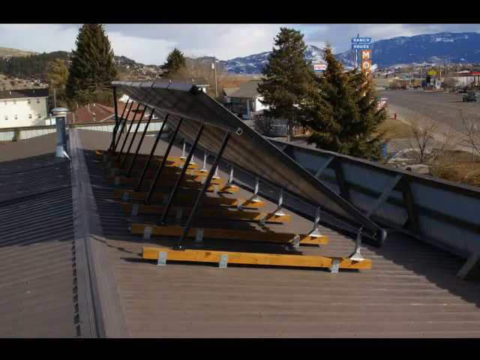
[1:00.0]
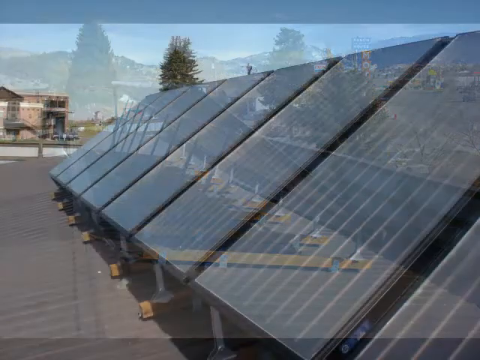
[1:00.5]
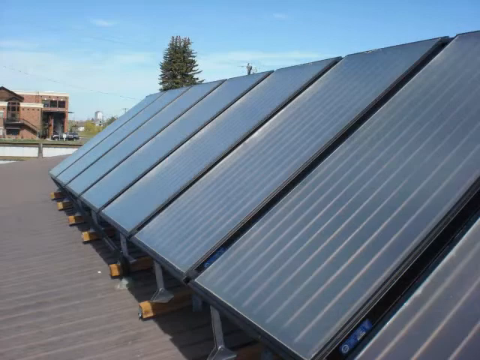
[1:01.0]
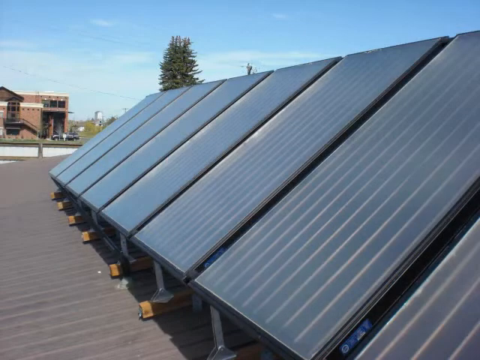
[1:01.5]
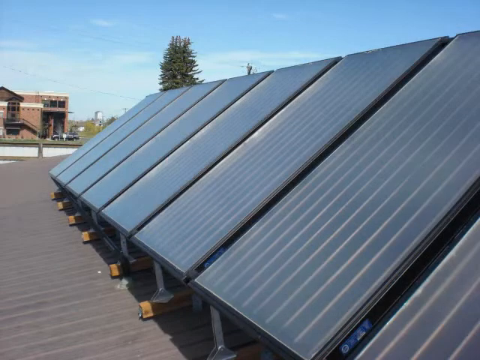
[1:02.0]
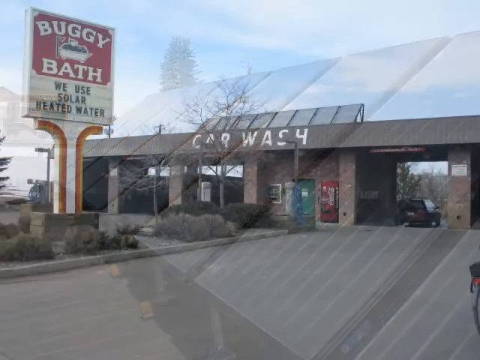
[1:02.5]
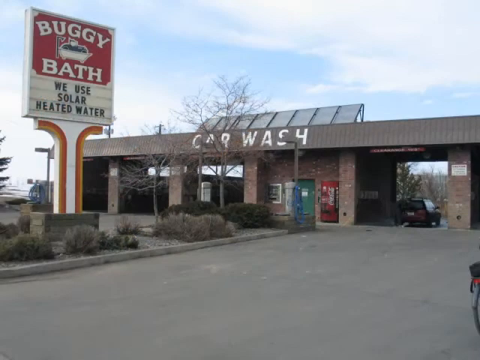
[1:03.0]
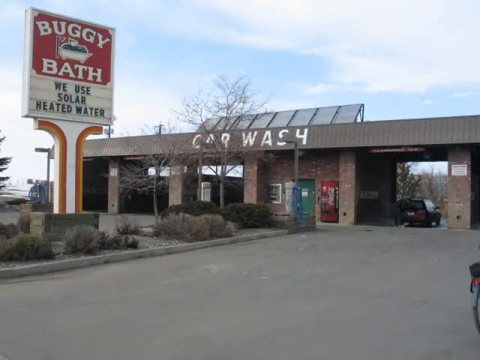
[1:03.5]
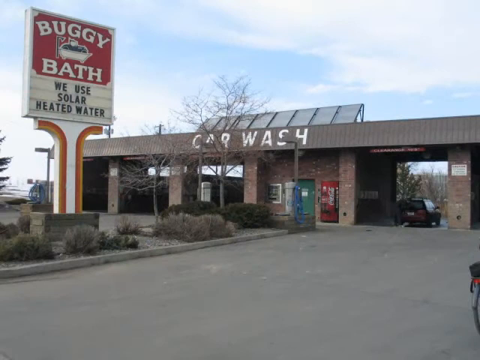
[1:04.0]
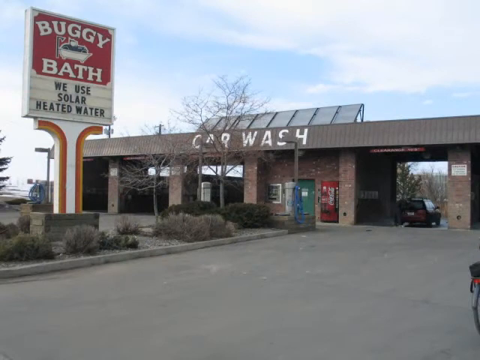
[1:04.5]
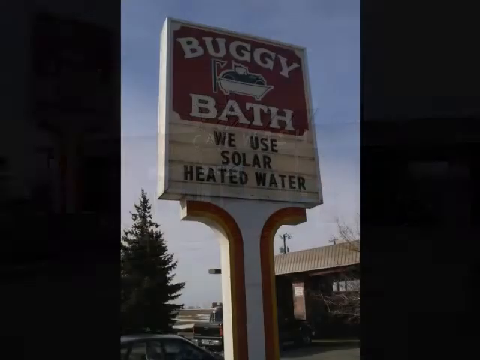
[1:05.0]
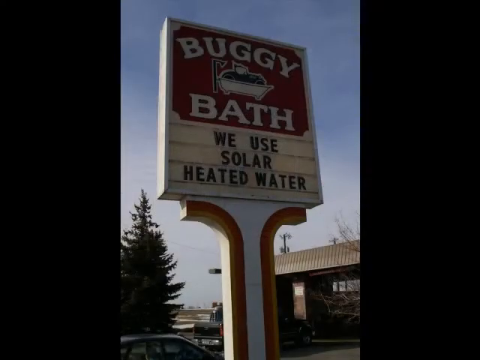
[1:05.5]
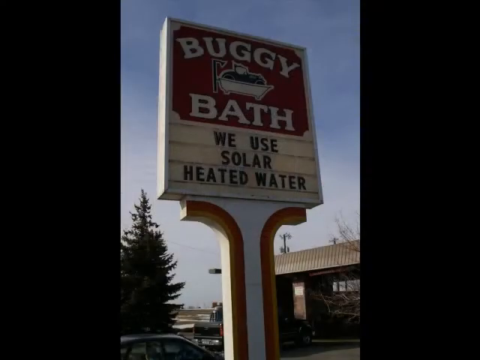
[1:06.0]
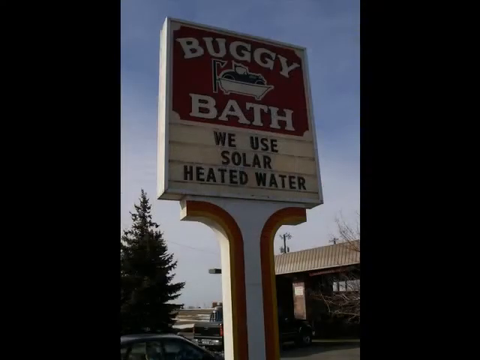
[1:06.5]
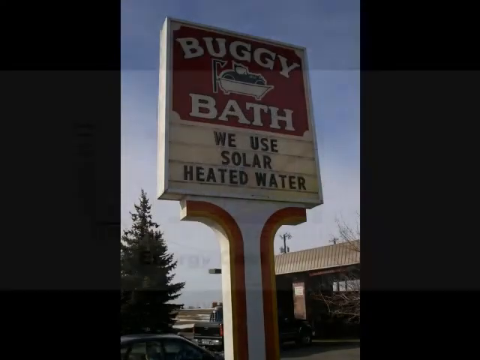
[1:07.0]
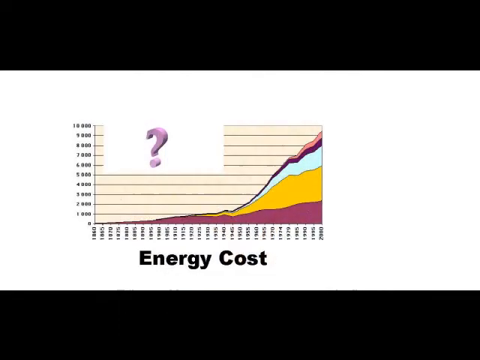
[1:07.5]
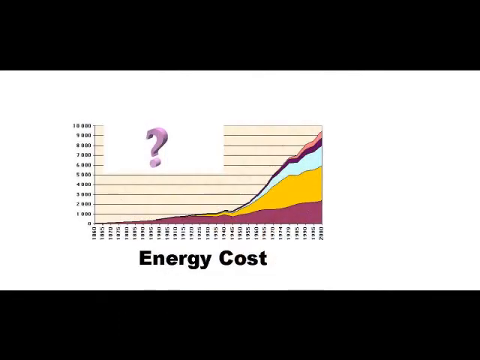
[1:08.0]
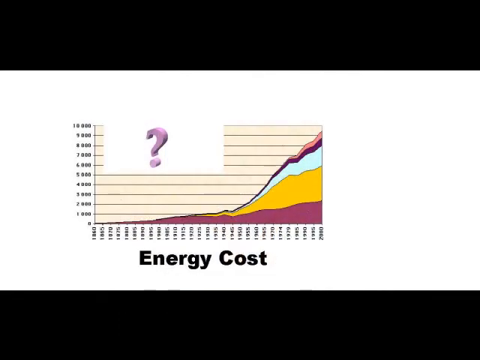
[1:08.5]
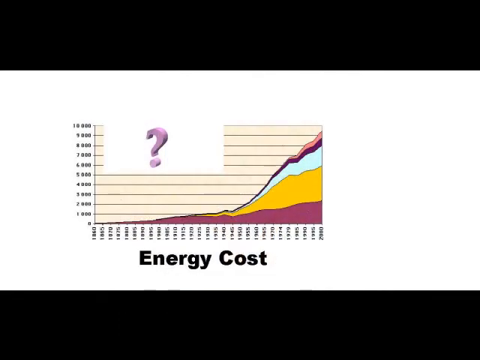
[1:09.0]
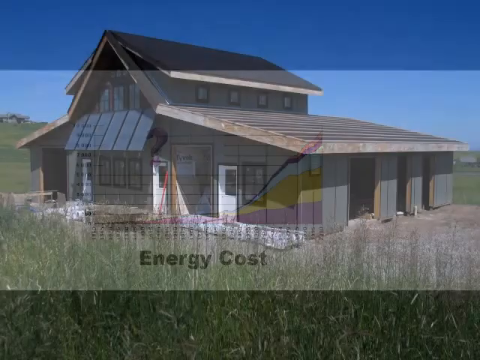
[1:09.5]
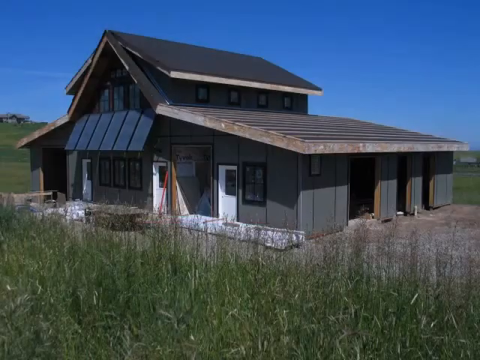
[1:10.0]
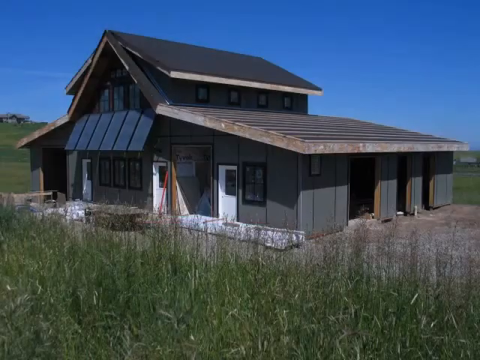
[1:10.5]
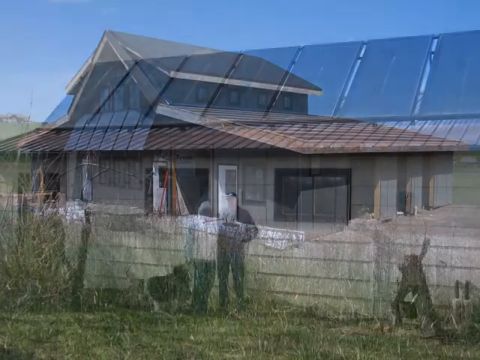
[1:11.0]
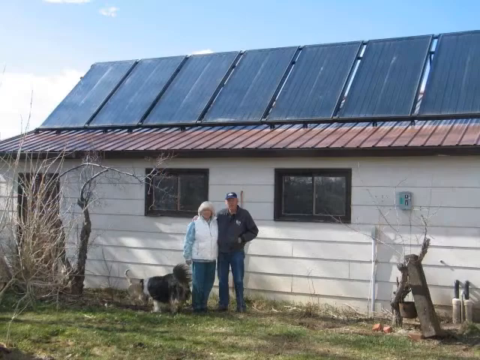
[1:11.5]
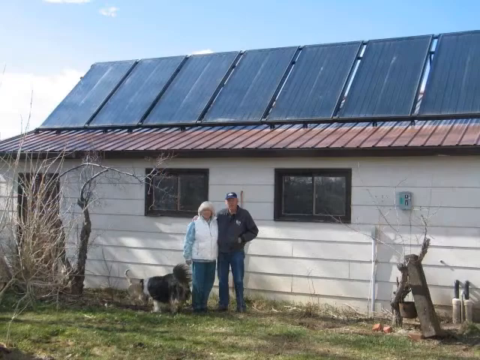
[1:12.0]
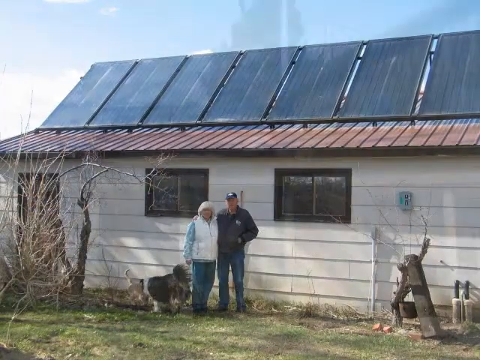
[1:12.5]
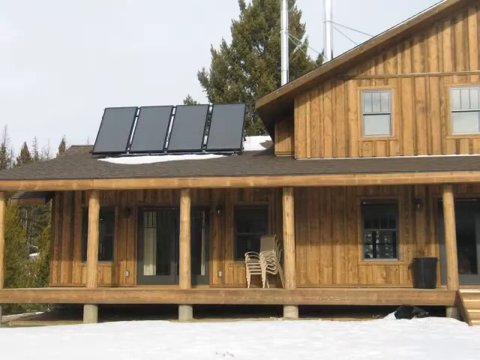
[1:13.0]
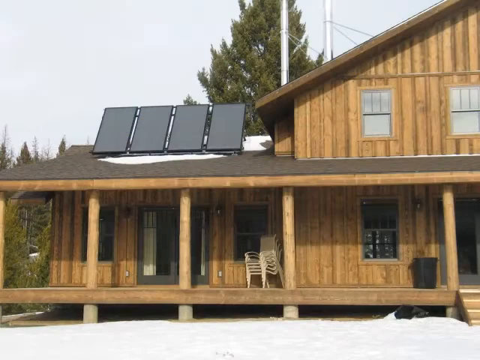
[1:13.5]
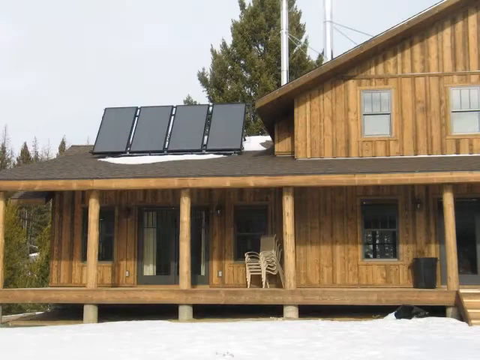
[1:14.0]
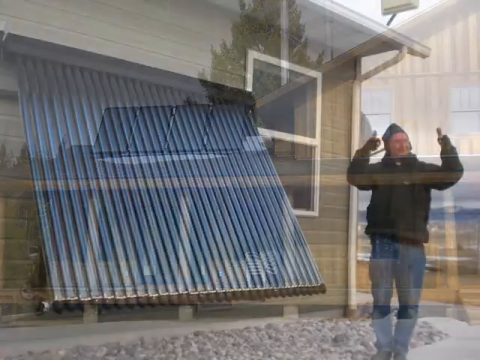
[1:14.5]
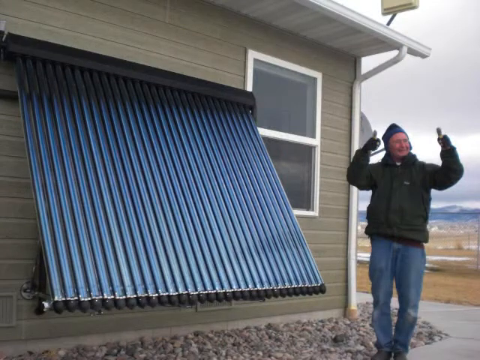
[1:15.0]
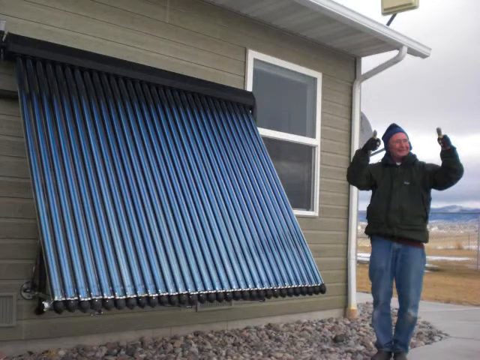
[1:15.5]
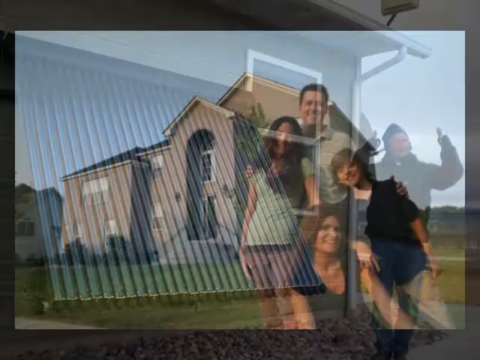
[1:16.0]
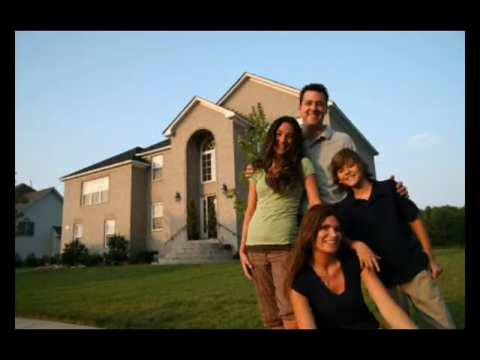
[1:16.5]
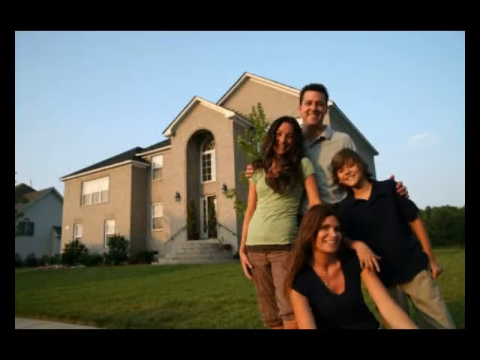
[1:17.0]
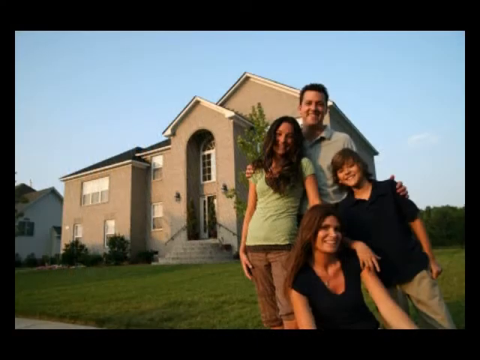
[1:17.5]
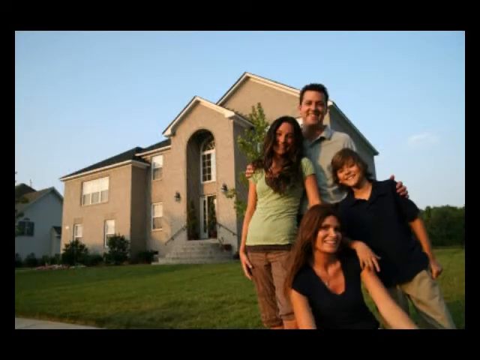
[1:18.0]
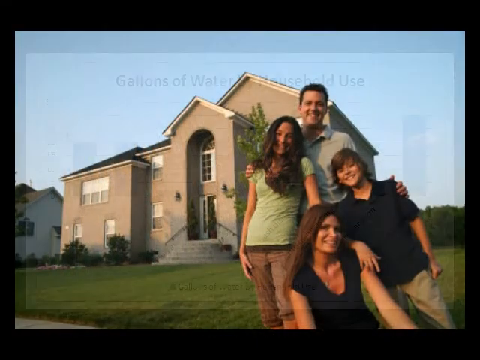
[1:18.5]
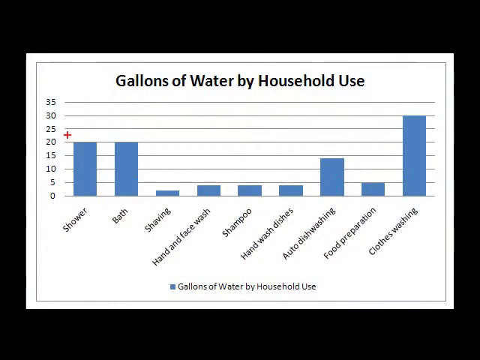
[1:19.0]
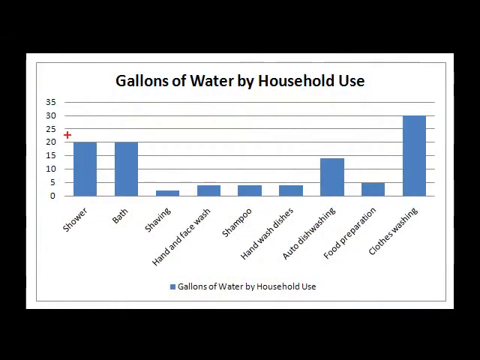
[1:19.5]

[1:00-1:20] The camera shows the solar panels from a different angle, then shows the outside of the building from a different angle. The building is named Buggy Bath; it has a big sign outside that also says "we use solar heated water". It is probably winter, as bare trees stand outside the car wash, and from this angle only one car is visible in one of the bays. Next is a close-up photograph of the Buggy sign. A graph of energy cost follows, starting very low and then rising quite quickly. The axes are not labeled; the x-axis runs from 1840 to 2010, possibly years, and the y-axis has numbers from 1000 to 10,000. There is a question mark on the graph. The next photograph shows a house standing in a large field with solar panels, apparently above the door. A number of photographs of different houses follow, seemingly all with solar panels. One is a wooden house. Another seems to be in the middle of nowhere, somewhere very cold, with a very bundled-up man standing next to it and possibly snow in the distance; a large panel is attached to the wall. Then a family, apparently a mum, dad, teenage girl and younger boy, stands in front of a brown house. The next image is a graph titled "gallons of water by household use", showing how many gallons each household action takes: clothes washing takes the most at 30 gallons, followed by showers and baths at 20 gallons, and shaving takes the least at possibly two gallons.